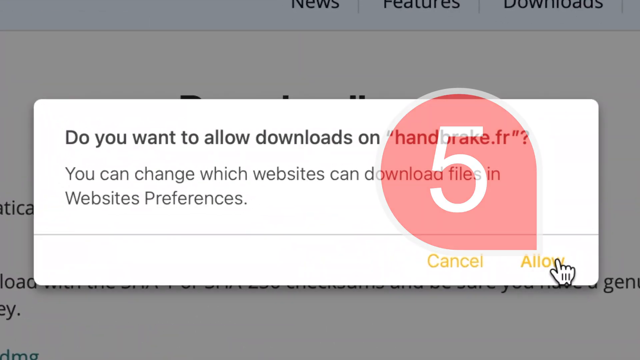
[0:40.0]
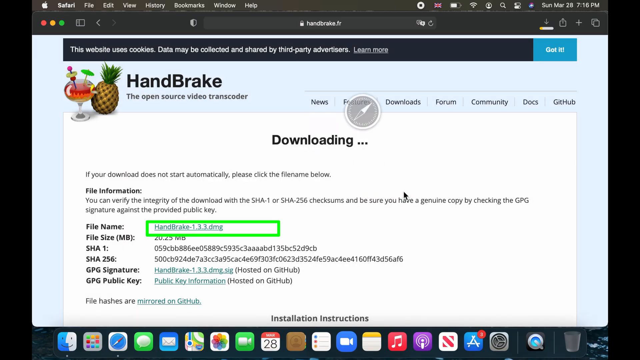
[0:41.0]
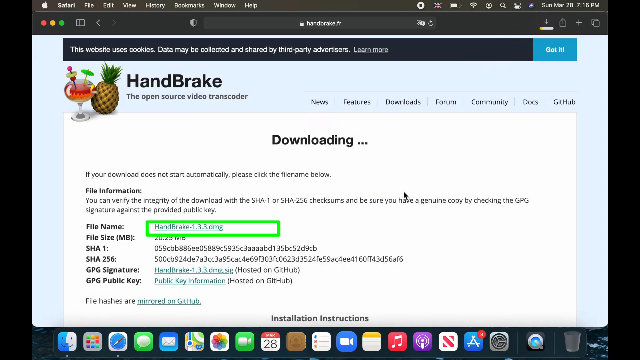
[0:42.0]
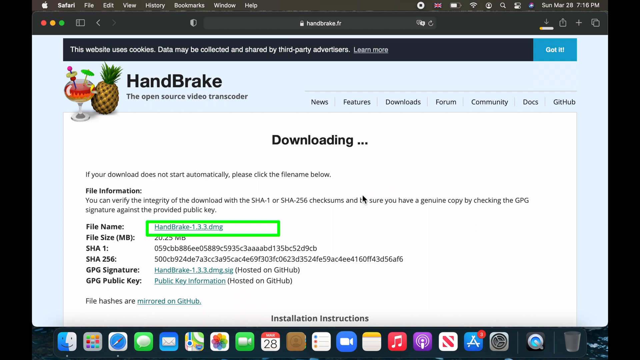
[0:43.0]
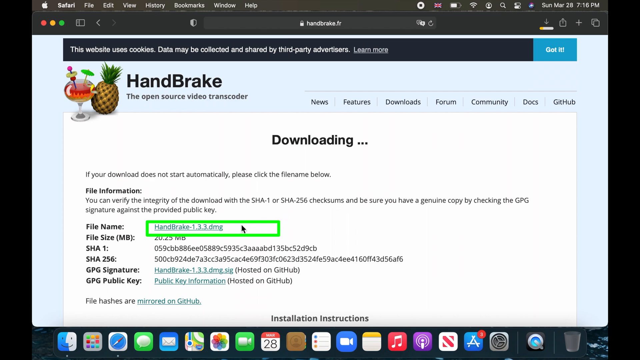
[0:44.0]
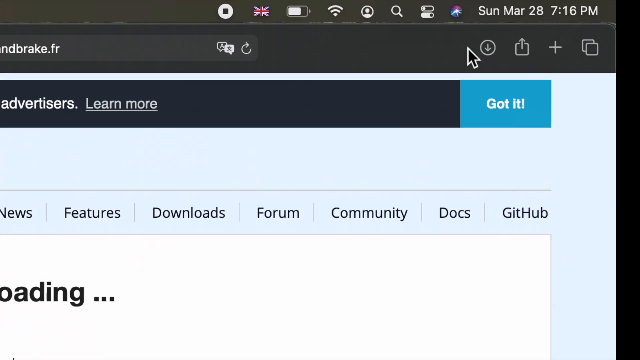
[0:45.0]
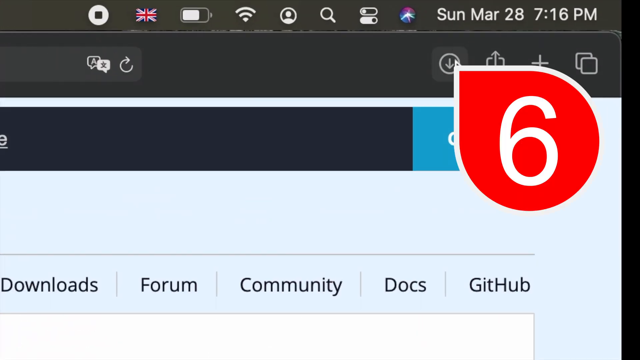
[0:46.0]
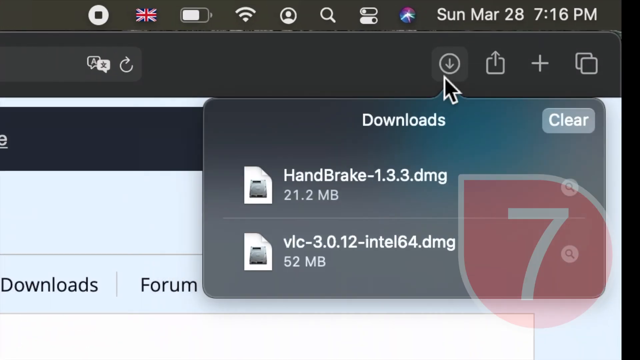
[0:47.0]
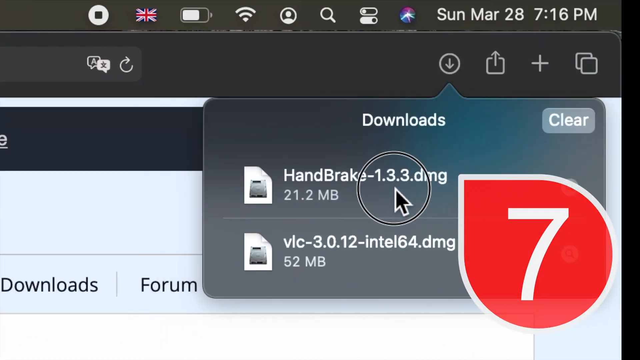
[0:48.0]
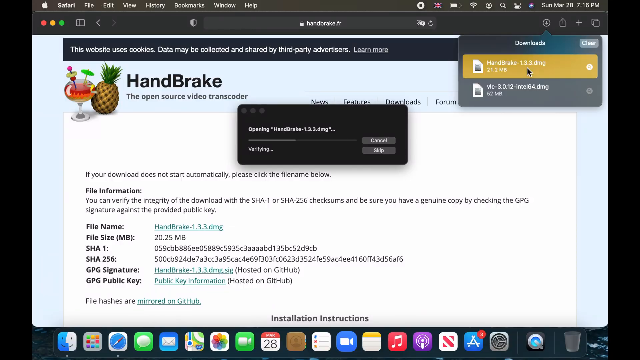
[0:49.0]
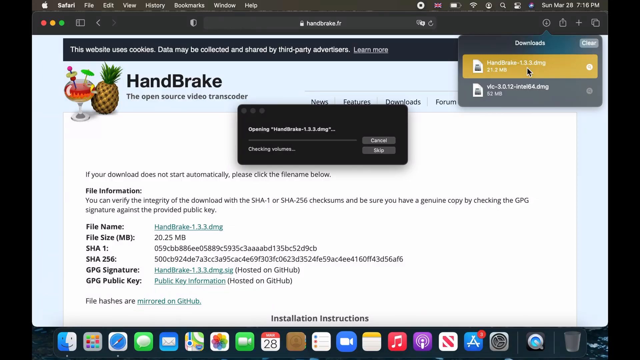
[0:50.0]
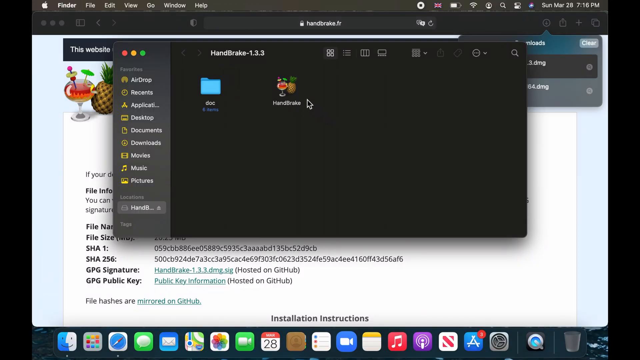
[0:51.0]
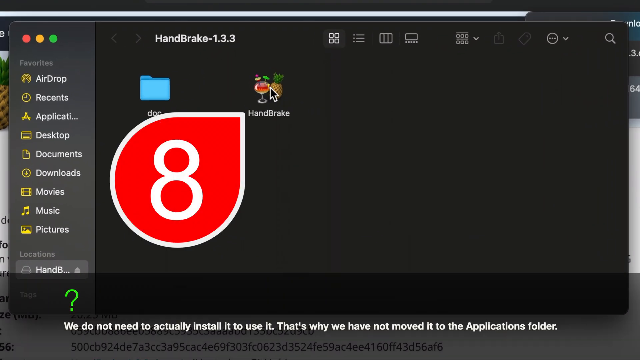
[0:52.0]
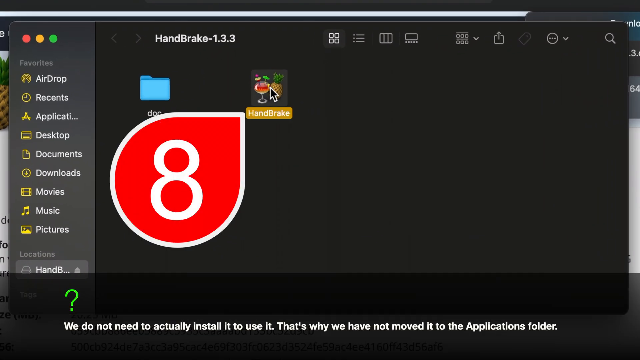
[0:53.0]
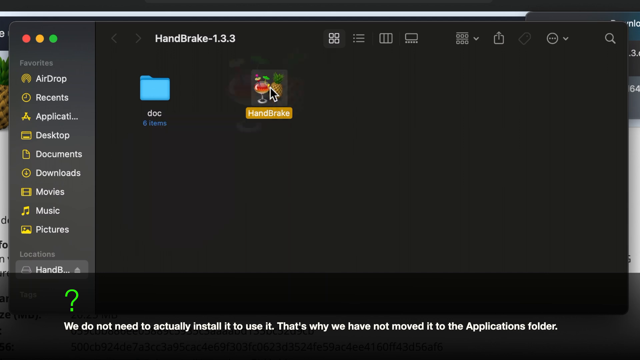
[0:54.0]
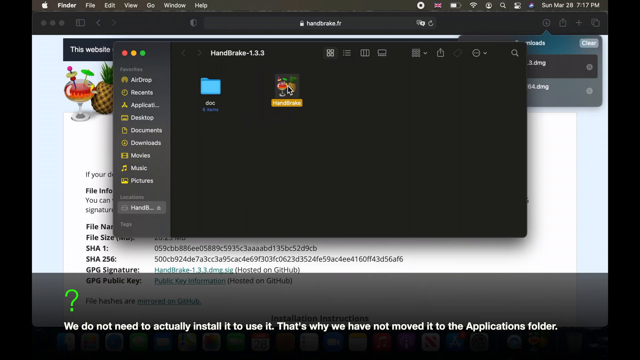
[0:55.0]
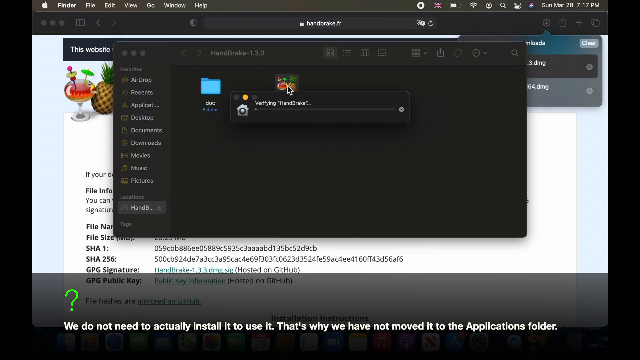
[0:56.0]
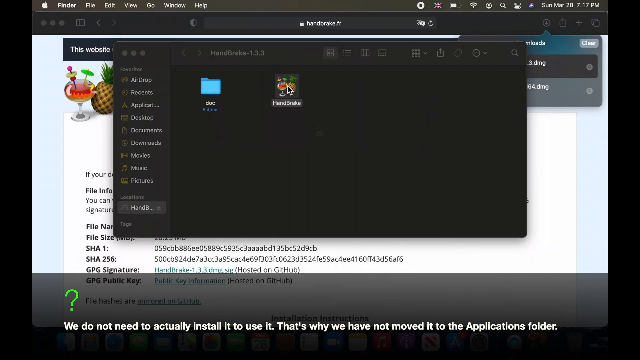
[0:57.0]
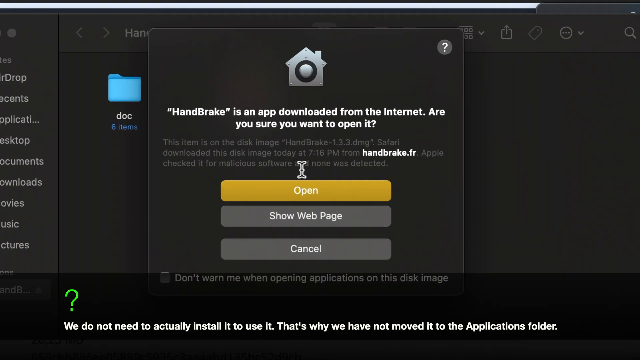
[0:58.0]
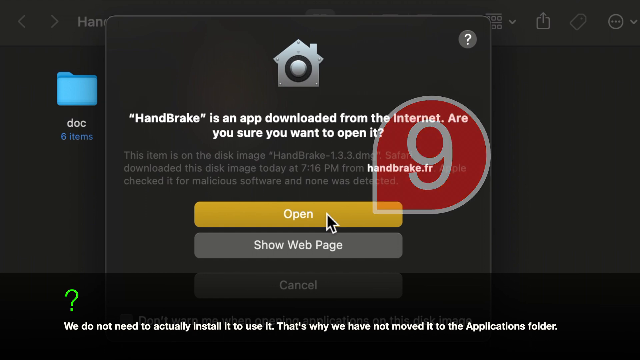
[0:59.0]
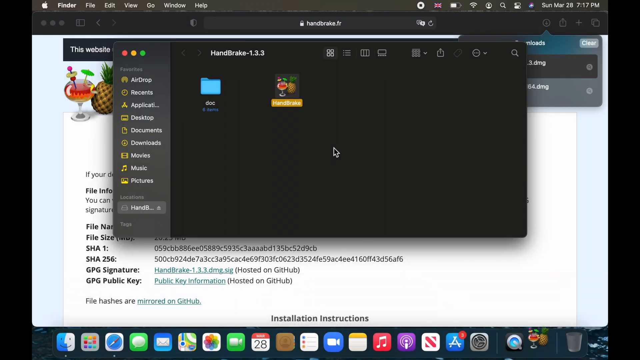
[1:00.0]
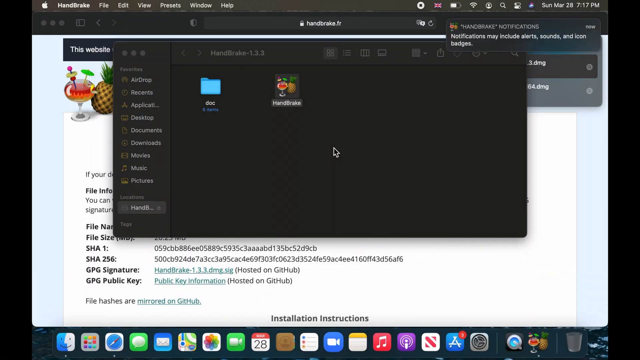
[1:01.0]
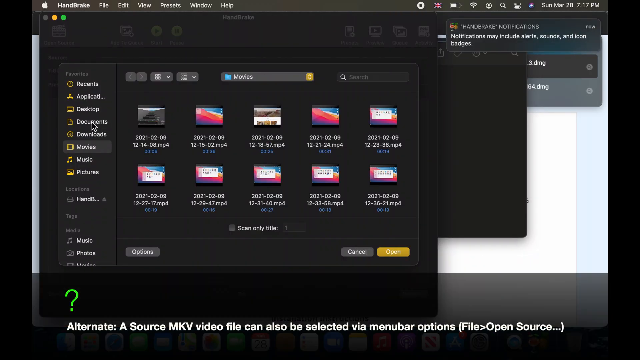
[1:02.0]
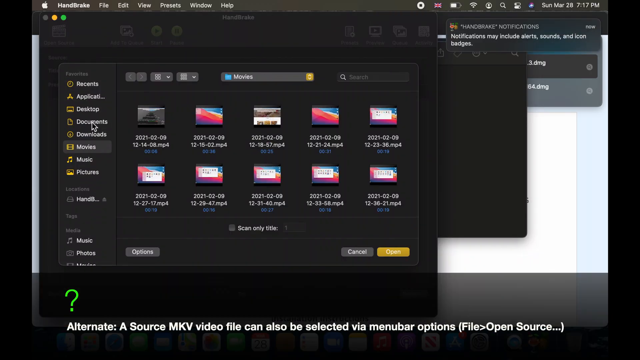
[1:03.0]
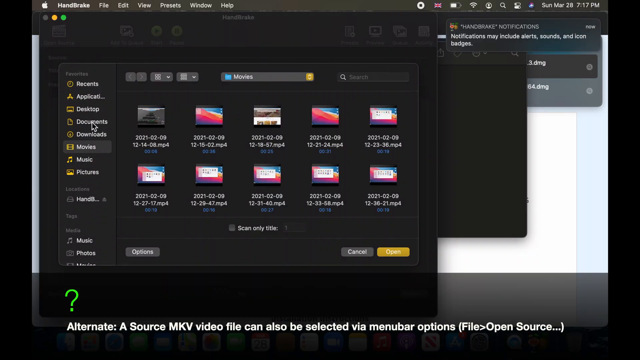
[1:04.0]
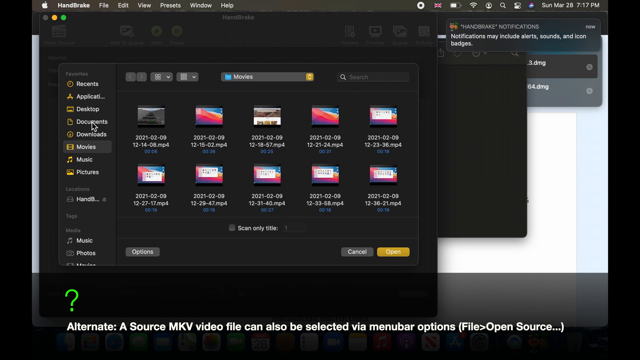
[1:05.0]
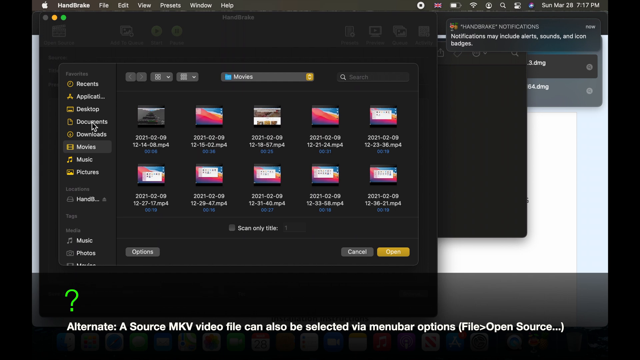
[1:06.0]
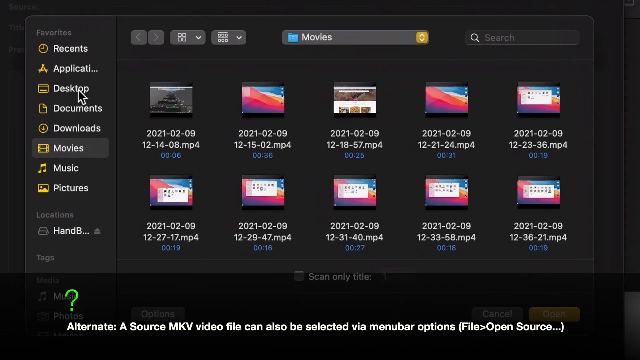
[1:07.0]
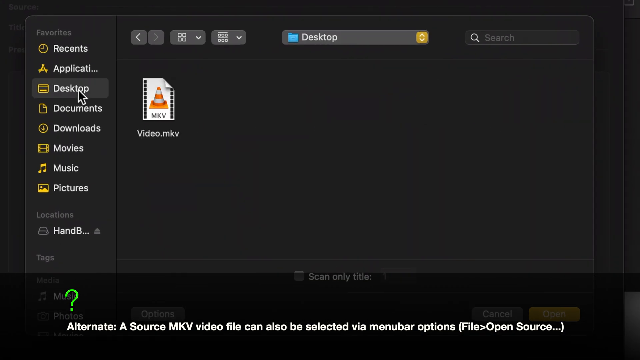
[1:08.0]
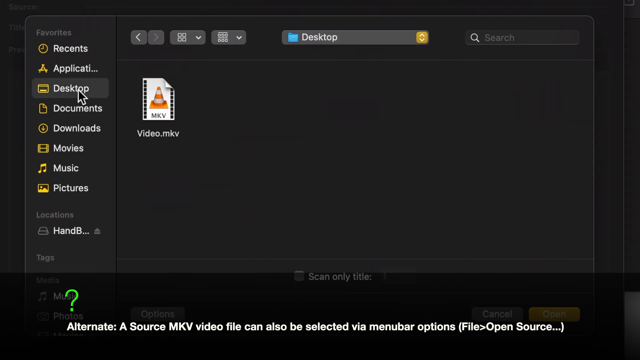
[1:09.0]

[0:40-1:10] A website shows a large white rectangular pop-up with curved edges. Black text reads "do you want to allow downloads on handbrake.fr? You can change which websites can download files in website preferences." In the bottom right, yellow text reads "cancel" and "allow." Over the text is a transparent red notification bubble, a balloon shape that comes to a fine point, with a white five in it. Then what looks like a downloading page appears, reading "downloading," with a lot of technical information. The file name, in green over "handbrake," includes a bunch of hard-to-read numbers, and the mouse hovers over it. The view moves to the upper right-hand corner of the browser window, where the download symbol, a circle with an arrow pointing down, appears. A red bubble with a white six pops up, followed by a red bubble with a white seven. A downloads list labeled "downloads" appears in a gray rectangle, with white text reading "handbrake-1.3.3.dmg." The cursor clicks on it, and it looks like it is downloading. A black screen immediately pops up showing Handbrake installed, with the Handbrake symbol of a pineapple and a drink. A white eight appears in another red bubble, and the symbol is clicked. The software opens, and a yellow "Open" button is clicked. What looks like a bunch of images then appears, possibly the software itself. It looks like "Desktop" has been clicked on the right-hand side, in a list reading "Recents, Application, Desktop, Documents, Downloads, Movies, Music, Pictures." There is what looks like an MKV file labeled "video.mkv," with a traffic cone as its symbol.